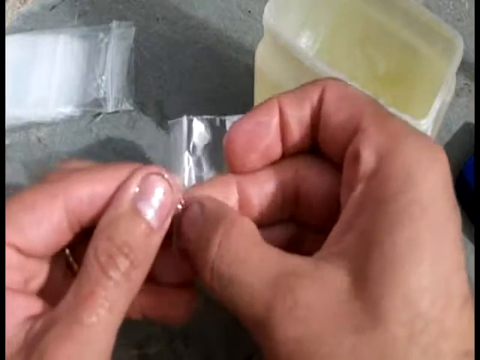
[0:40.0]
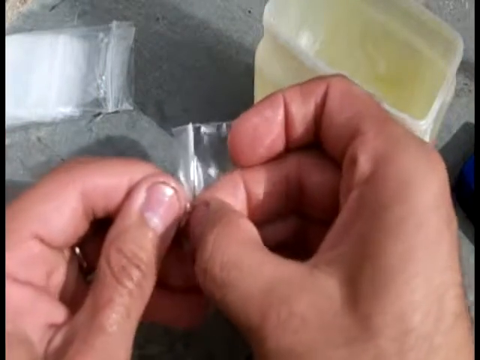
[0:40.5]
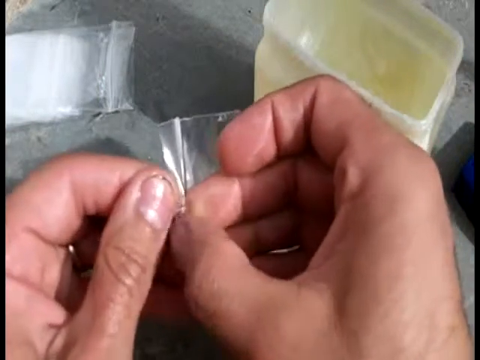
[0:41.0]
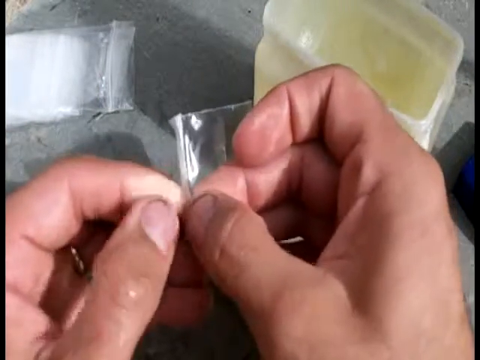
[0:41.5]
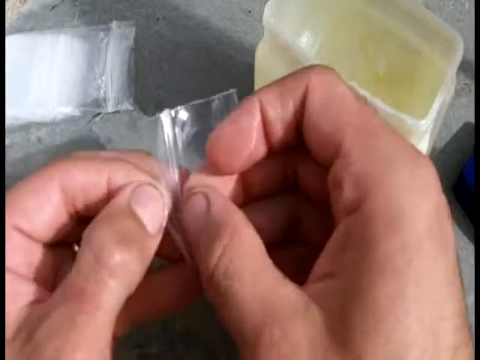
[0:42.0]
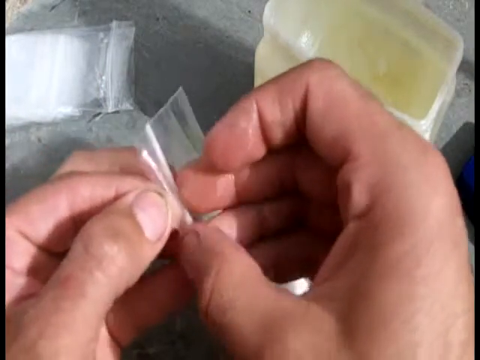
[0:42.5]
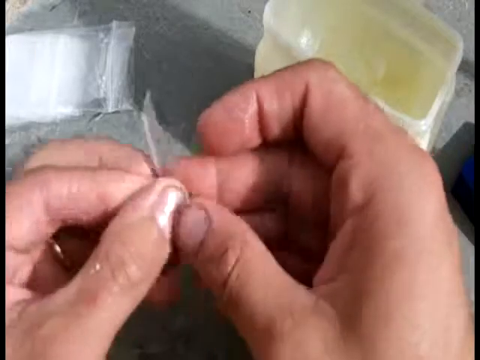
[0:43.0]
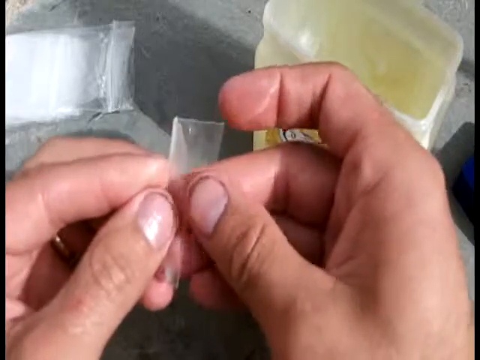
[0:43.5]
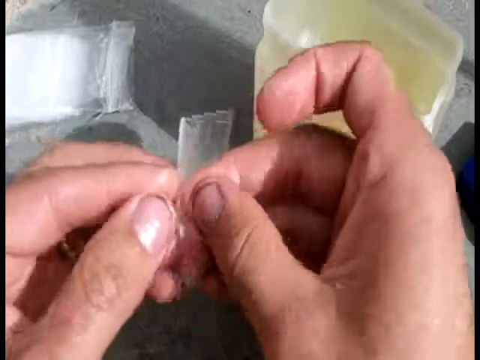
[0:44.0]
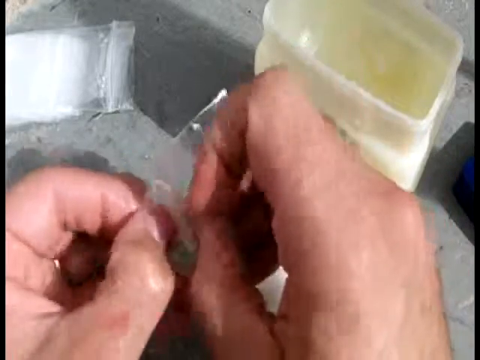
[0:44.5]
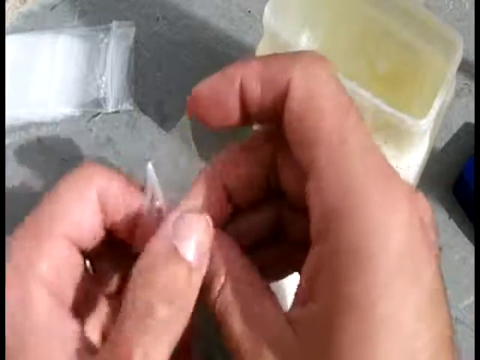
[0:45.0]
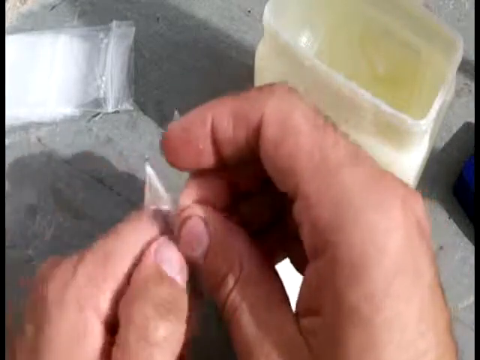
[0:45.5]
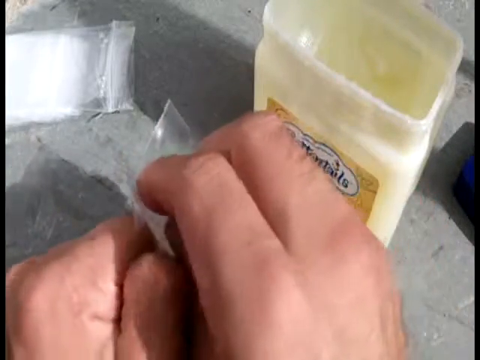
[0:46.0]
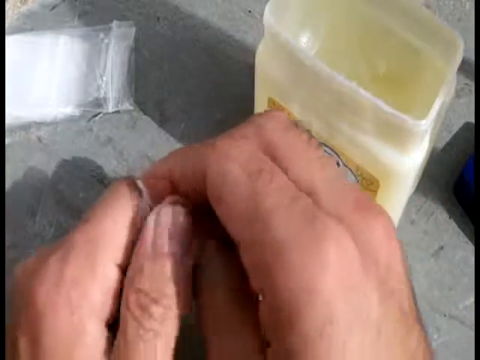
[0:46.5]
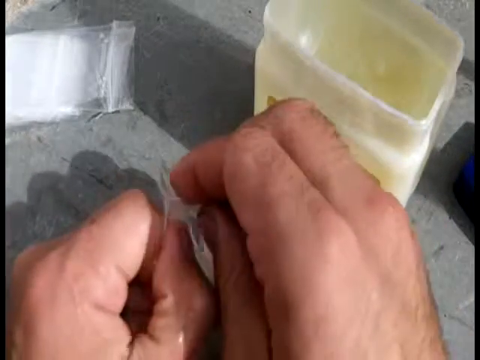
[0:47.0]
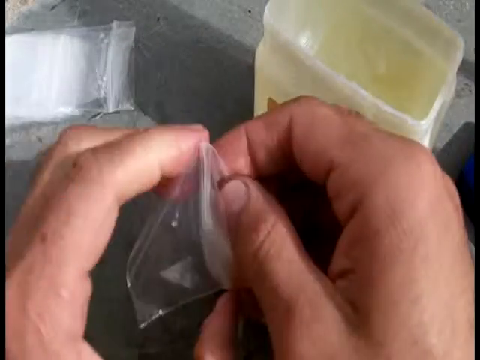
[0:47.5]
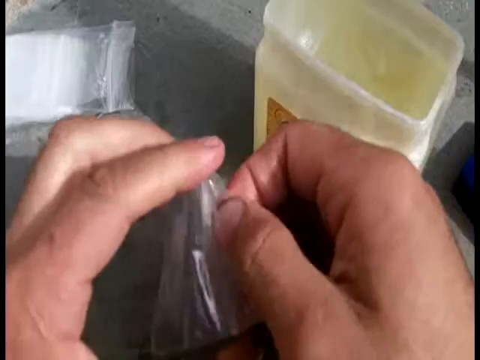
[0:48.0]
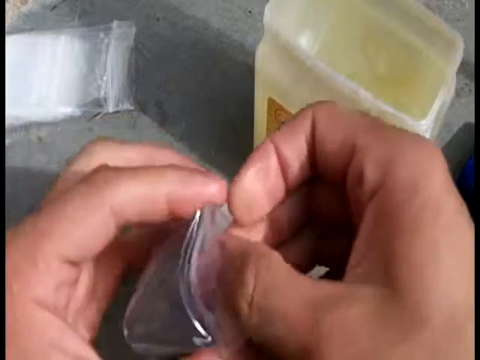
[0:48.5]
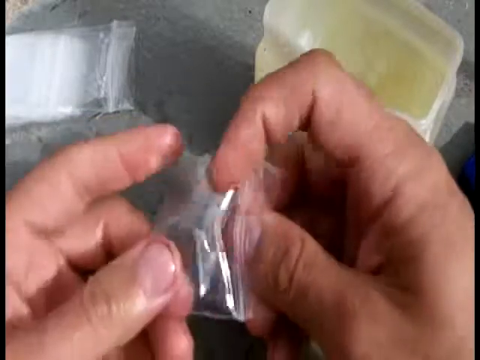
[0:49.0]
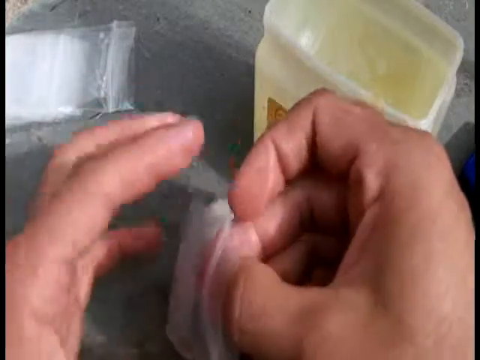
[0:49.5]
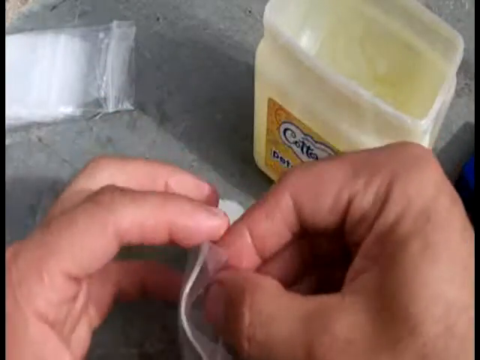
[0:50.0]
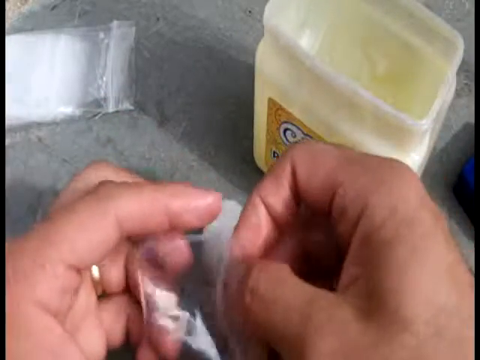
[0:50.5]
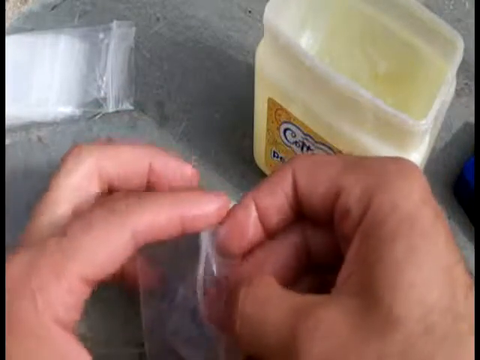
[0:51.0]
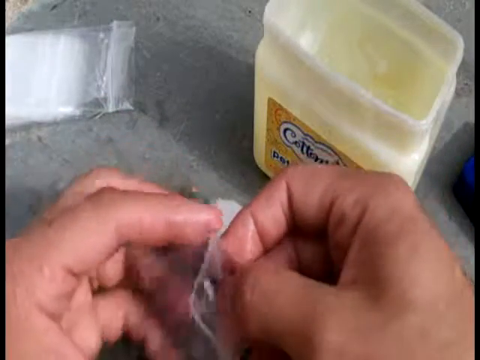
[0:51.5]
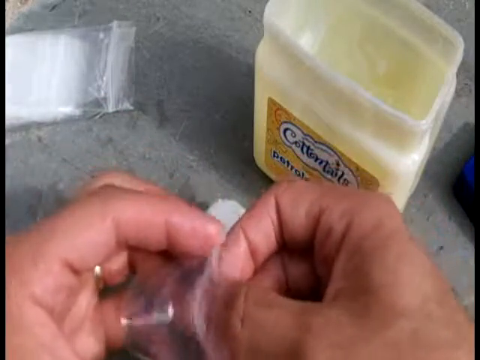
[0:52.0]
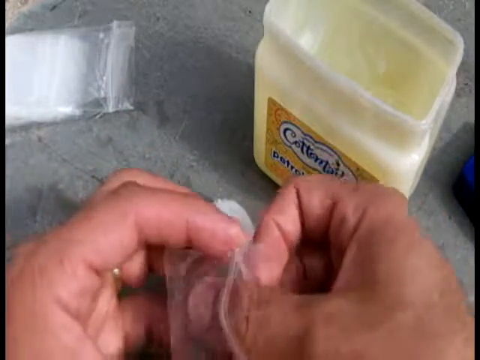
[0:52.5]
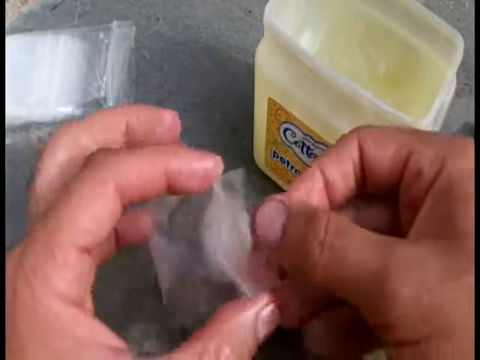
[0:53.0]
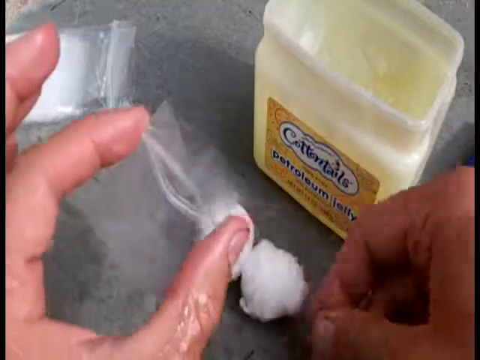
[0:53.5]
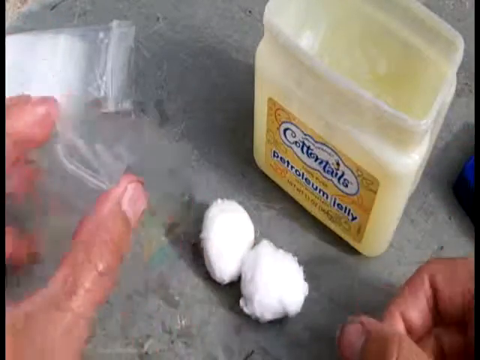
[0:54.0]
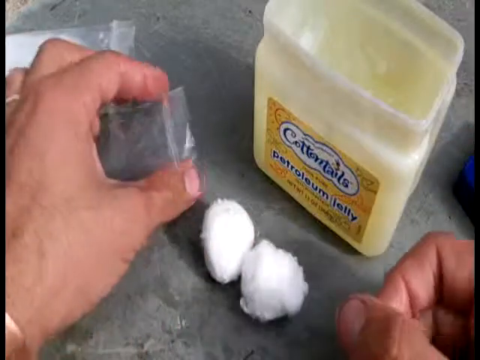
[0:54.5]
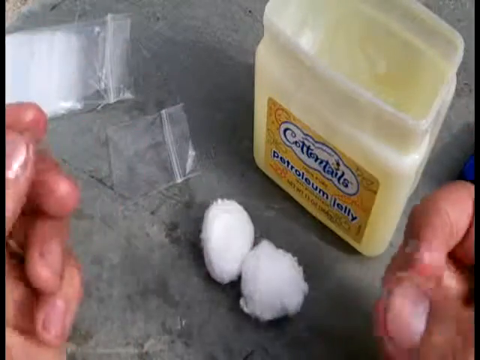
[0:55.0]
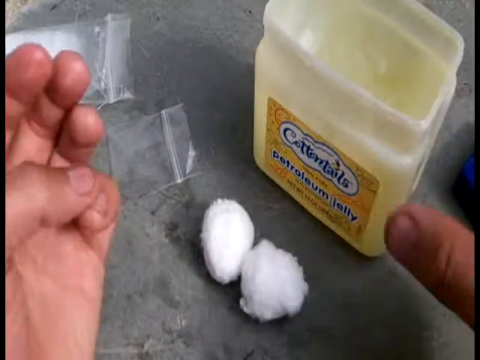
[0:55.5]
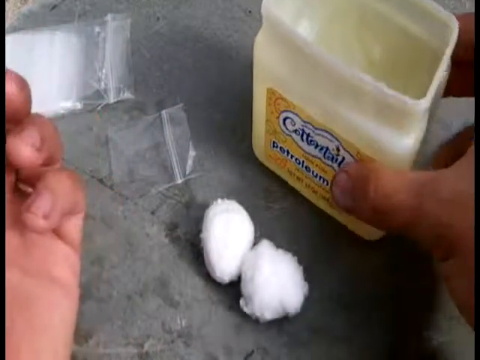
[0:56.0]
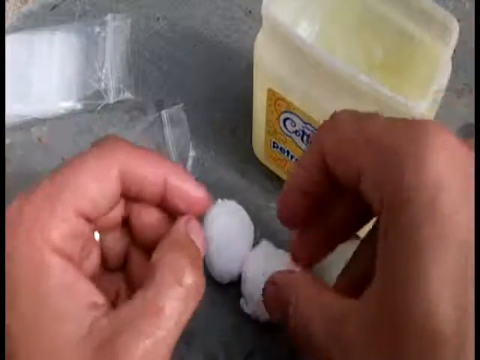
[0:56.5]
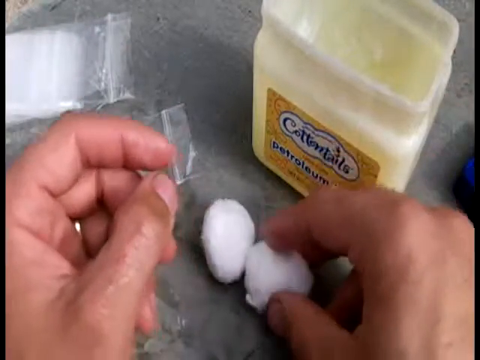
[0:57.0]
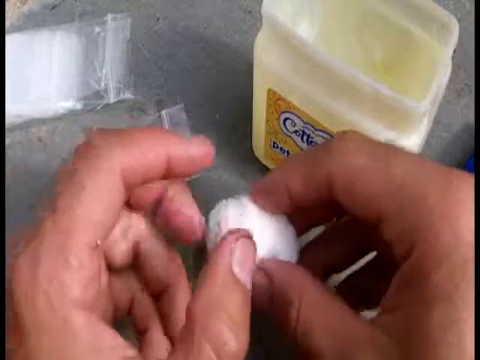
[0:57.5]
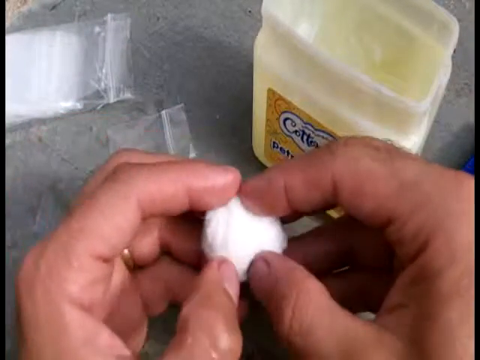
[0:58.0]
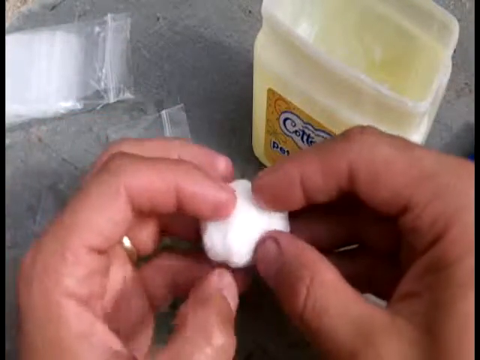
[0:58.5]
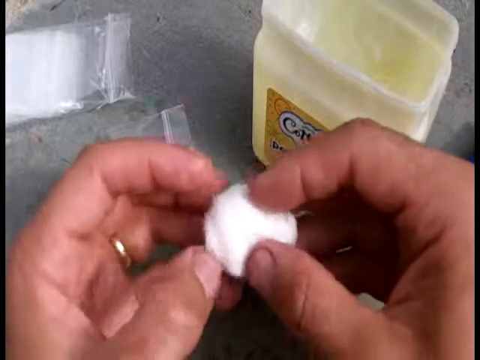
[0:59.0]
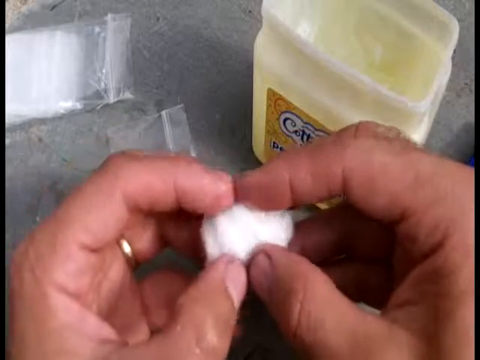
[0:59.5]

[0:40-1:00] A close-up shows a hand holding a small, clear Ziploc bag, separating the top of the bag with the thumbs. A light grey table is in the background, along with a jar of light yellow petroleum jelly with its lid off, and a larger, tall, narrow Ziploc bag is on the left side of the screen. The hands struggle a bit with the small bag before getting it open, gently squeezing the outer ends and sticking a thumb in to open it up a bit. They set the bag down on the gray tabletop and rub their fingers together, as if the fingers are greasy or slippery. They then pick up a white cotton ball and sort of gently feel around it, rotating it a bit.